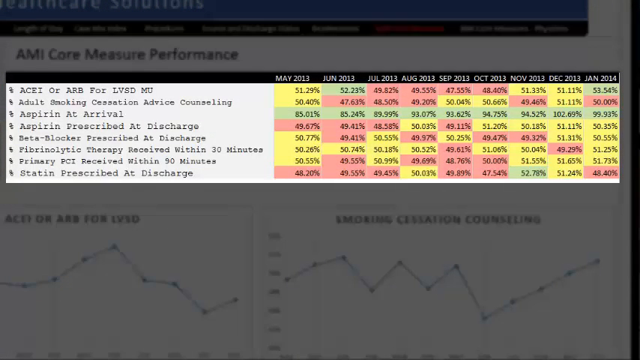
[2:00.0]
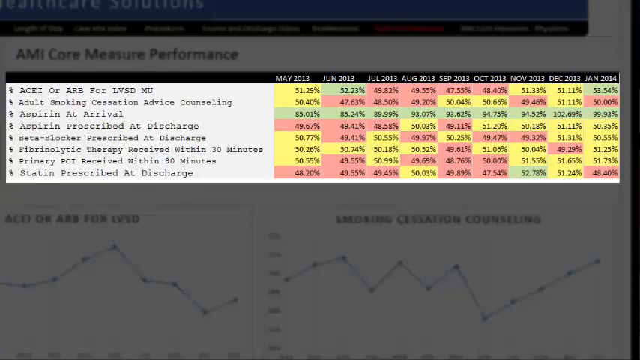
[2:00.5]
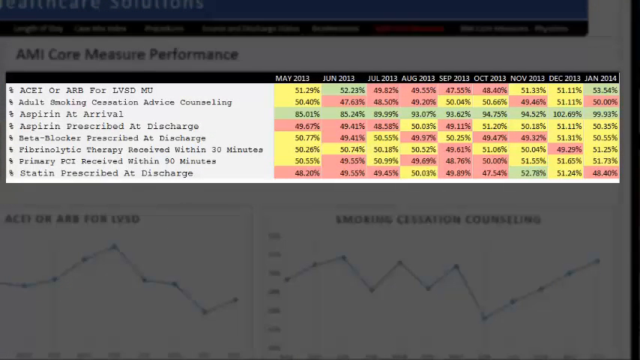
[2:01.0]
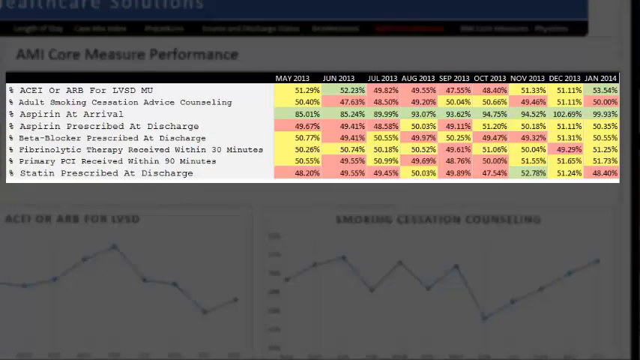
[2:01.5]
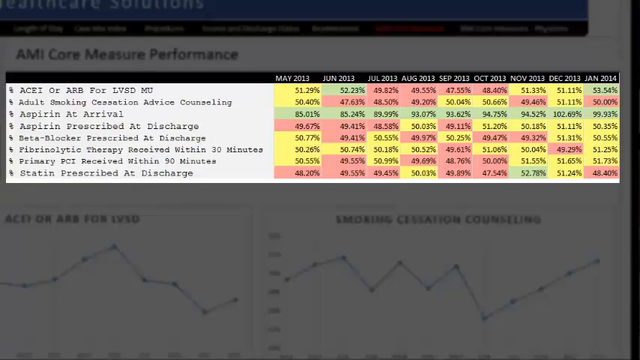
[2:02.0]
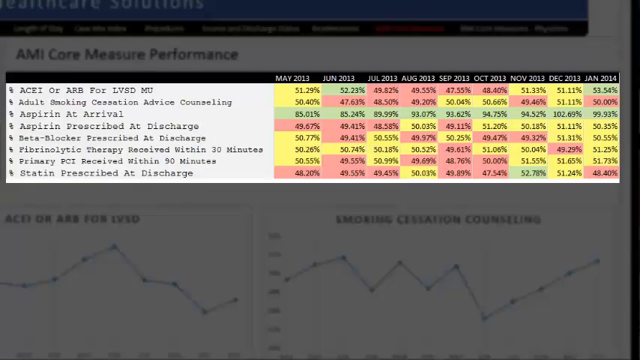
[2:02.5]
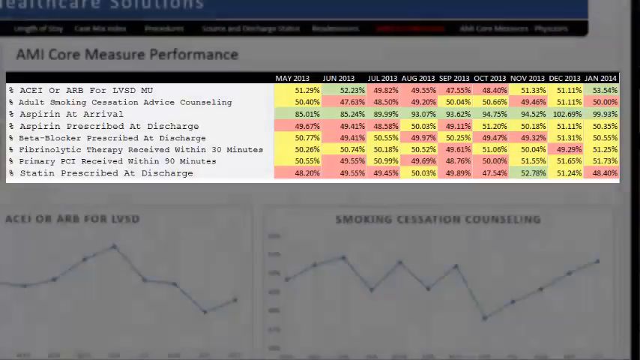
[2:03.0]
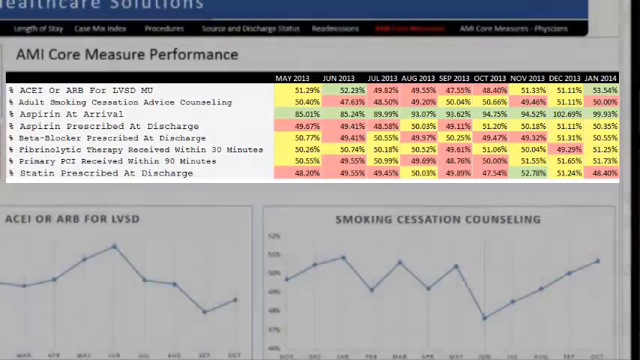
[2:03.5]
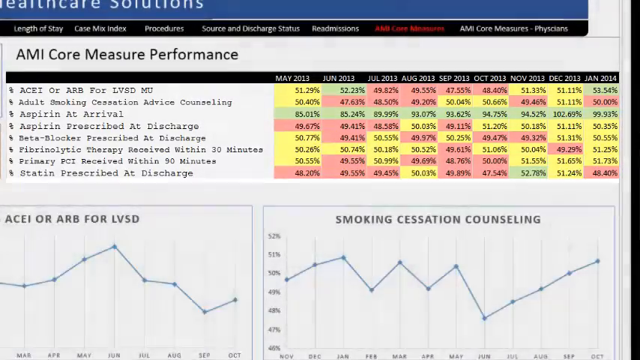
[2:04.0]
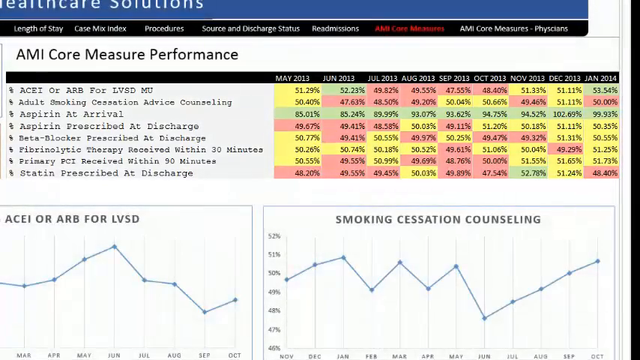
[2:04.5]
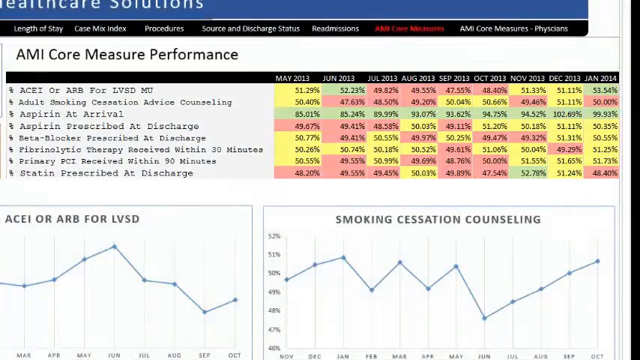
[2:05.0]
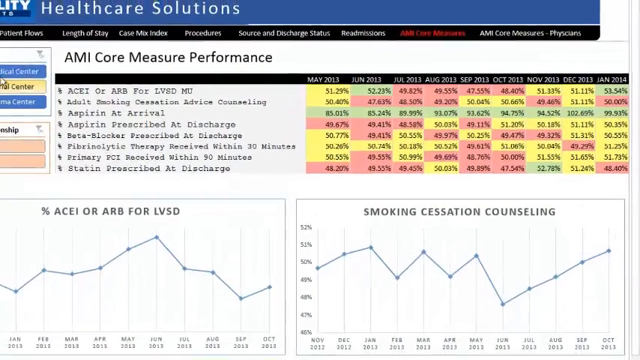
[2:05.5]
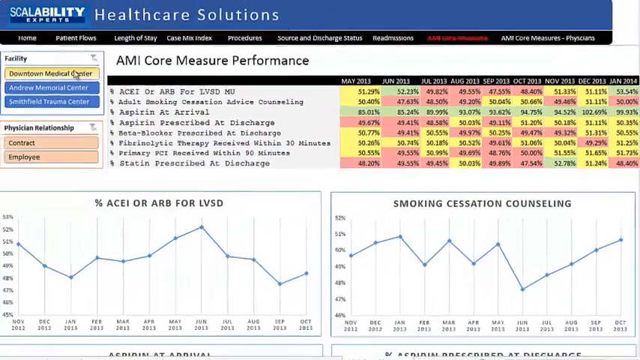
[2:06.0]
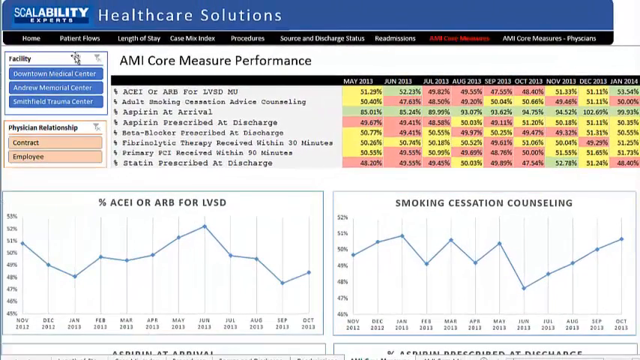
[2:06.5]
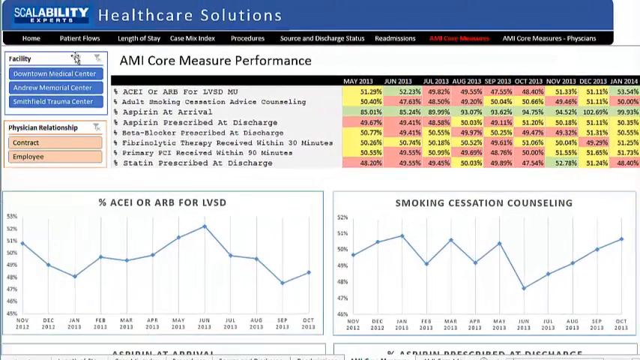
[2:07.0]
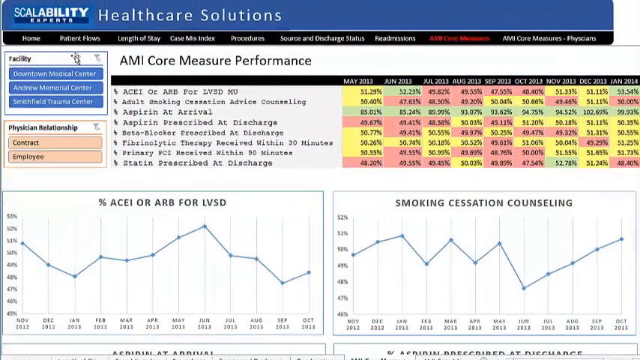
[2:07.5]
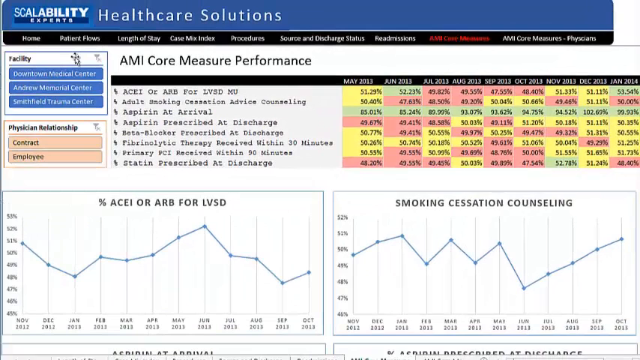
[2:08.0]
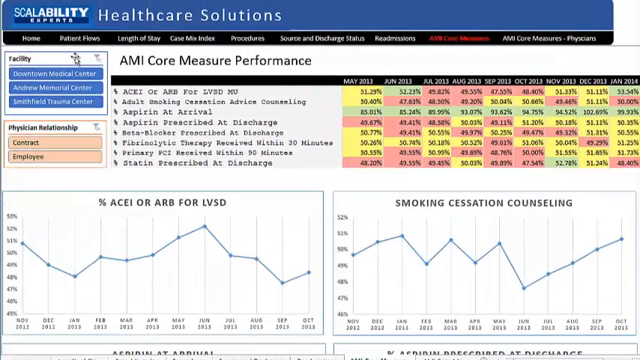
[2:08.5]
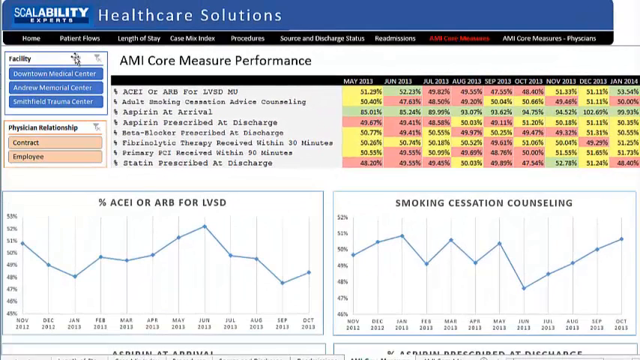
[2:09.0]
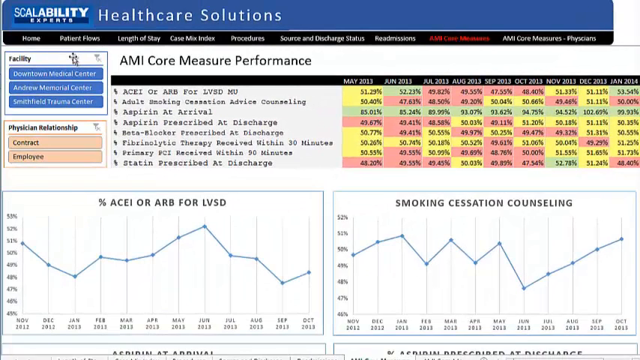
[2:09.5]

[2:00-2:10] The next slide changes format completely. The background is primarily dark gray and is segmented into three visible zones: one at the top extending the length of the box and almost half its depth, and two graph areas below it, the left one taking up about 40% of the remaining width and the right one the remaining 60%. The main content appears to be a chart embedded in this dark gray background. Its columns are dated May 23rd, June 23rd, July 2023, August 2023, September 2023, October 2023, November 2023, December 2023 and January 2024, and beneath them are numbers with percentage signs. The values appear in varying colors, green, pink and yellow, with no guide explaining what the colors mean.